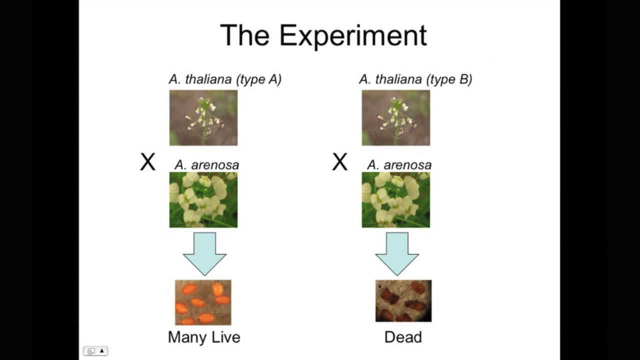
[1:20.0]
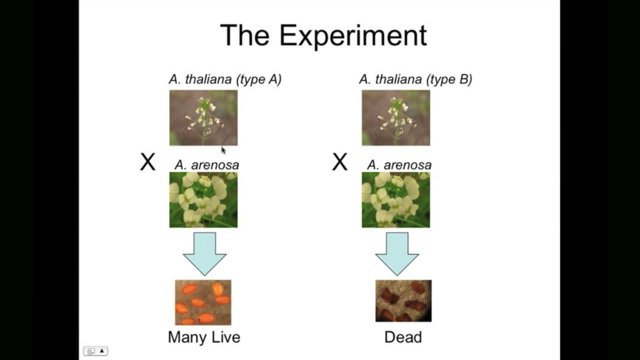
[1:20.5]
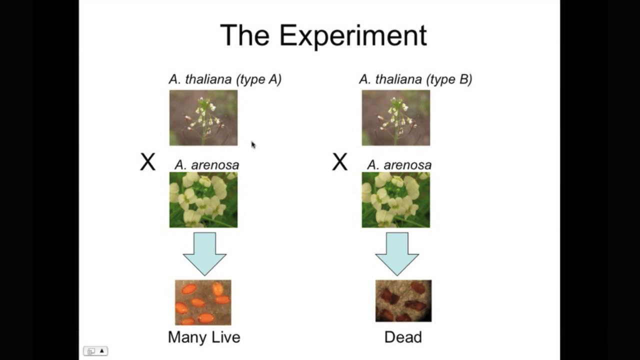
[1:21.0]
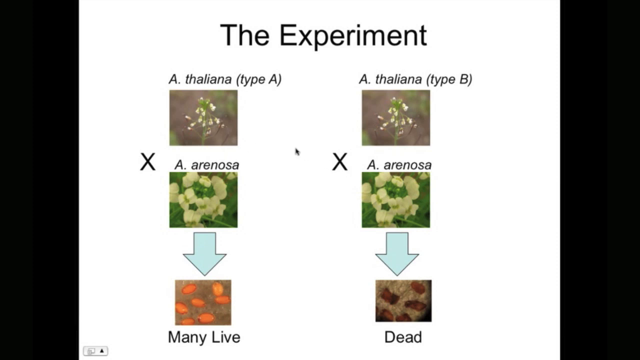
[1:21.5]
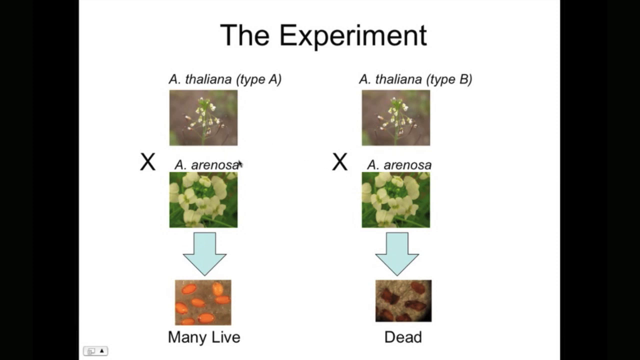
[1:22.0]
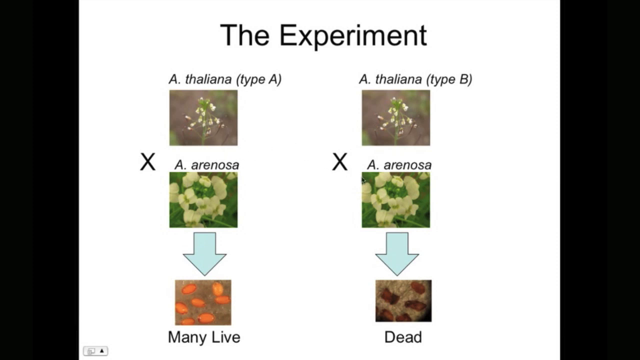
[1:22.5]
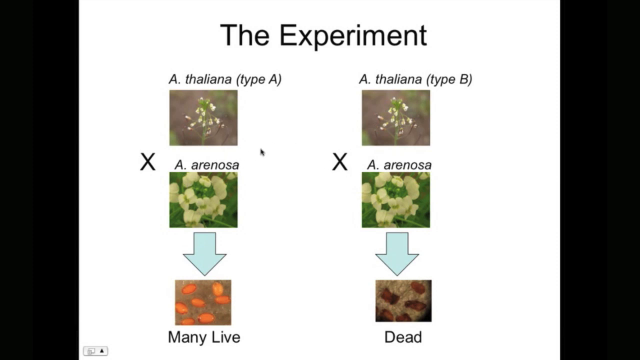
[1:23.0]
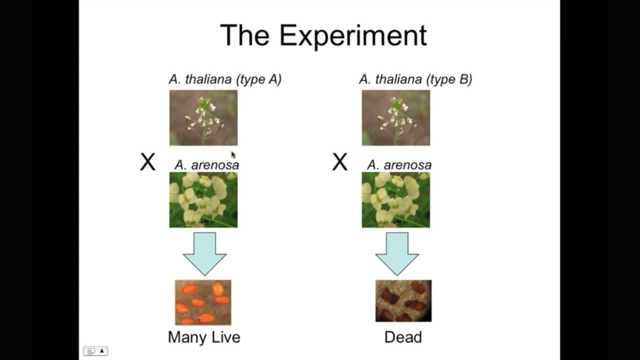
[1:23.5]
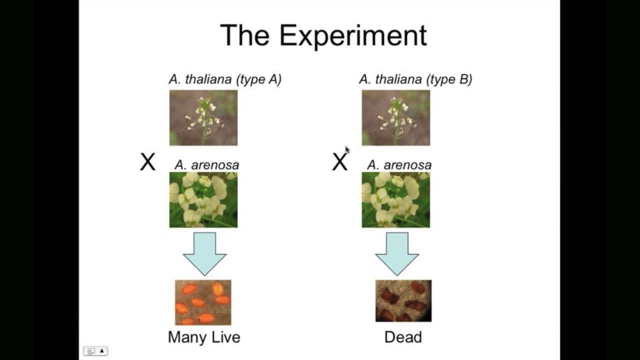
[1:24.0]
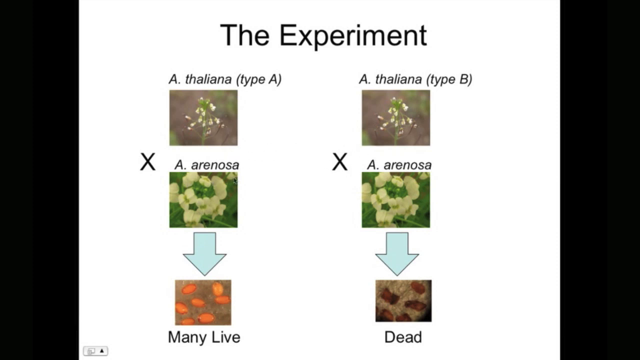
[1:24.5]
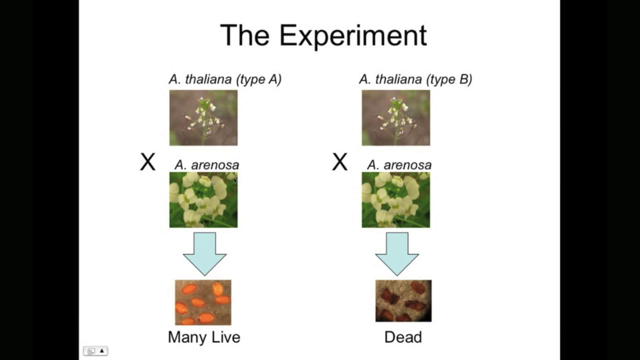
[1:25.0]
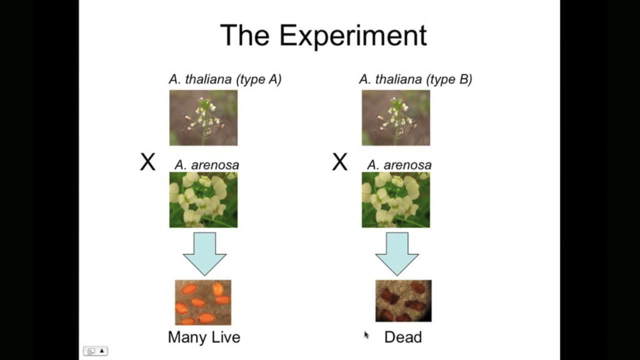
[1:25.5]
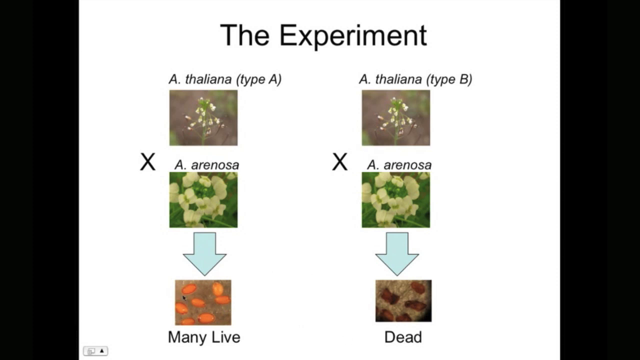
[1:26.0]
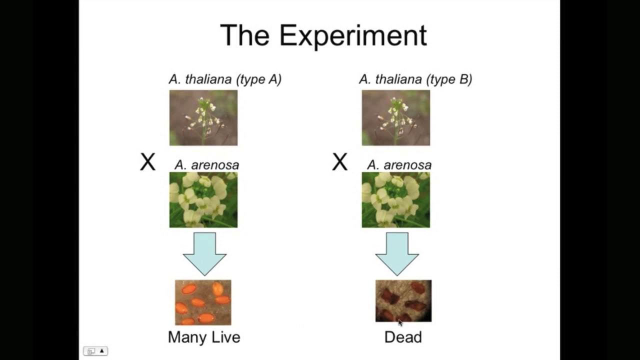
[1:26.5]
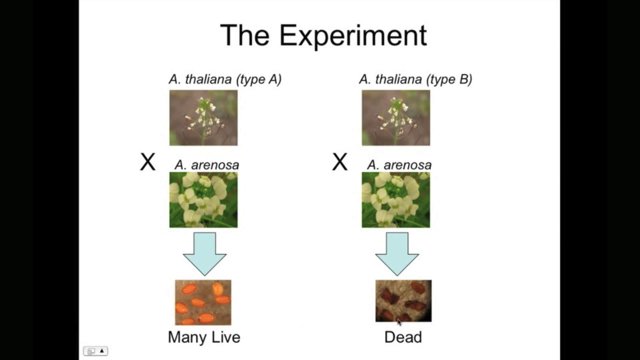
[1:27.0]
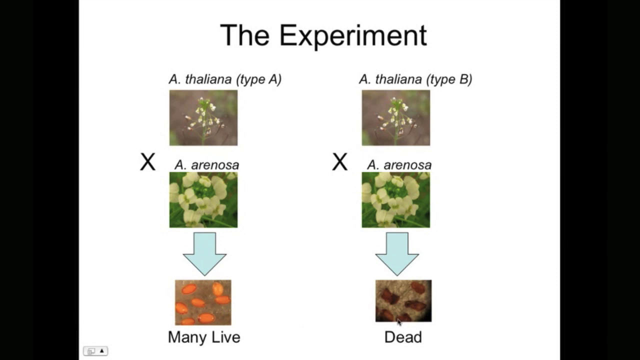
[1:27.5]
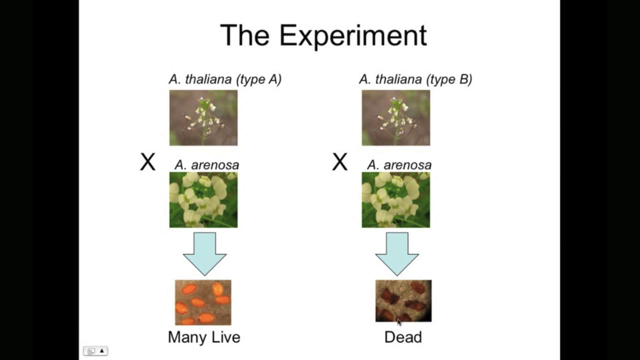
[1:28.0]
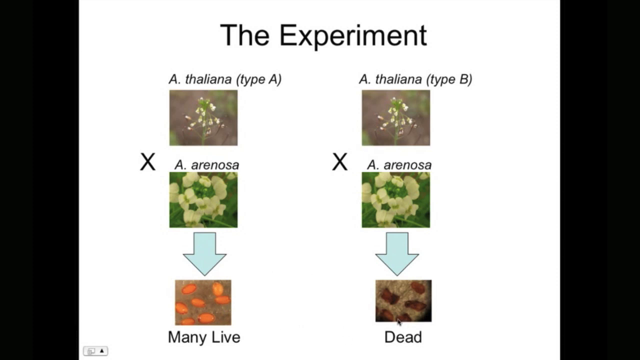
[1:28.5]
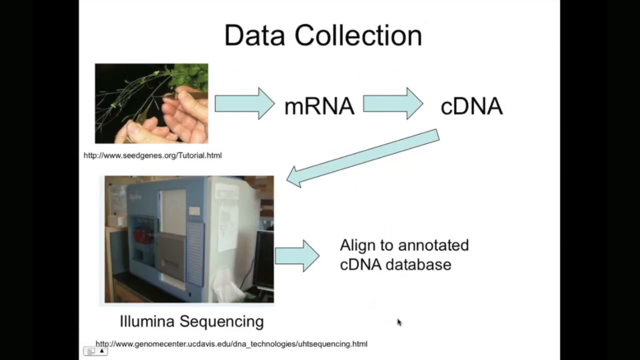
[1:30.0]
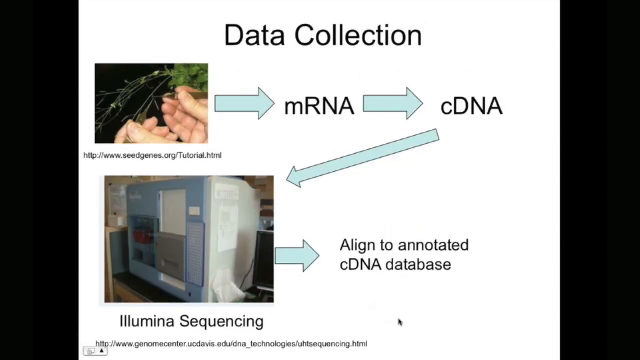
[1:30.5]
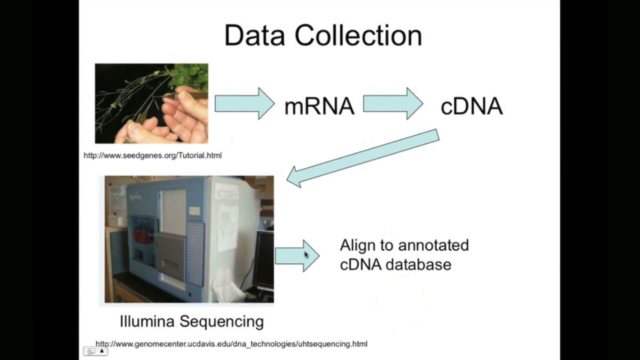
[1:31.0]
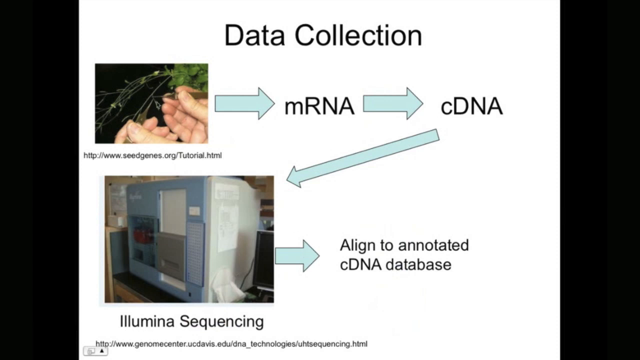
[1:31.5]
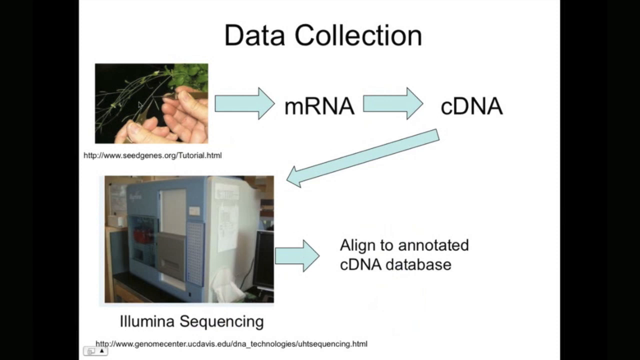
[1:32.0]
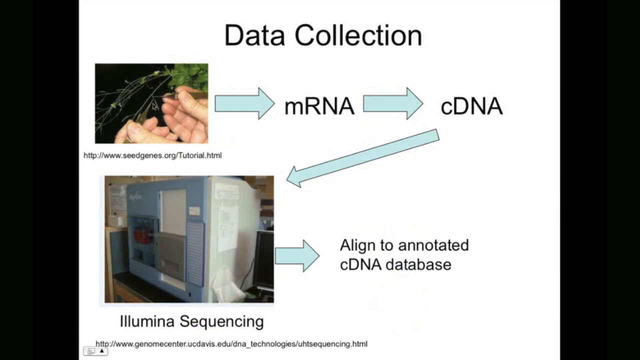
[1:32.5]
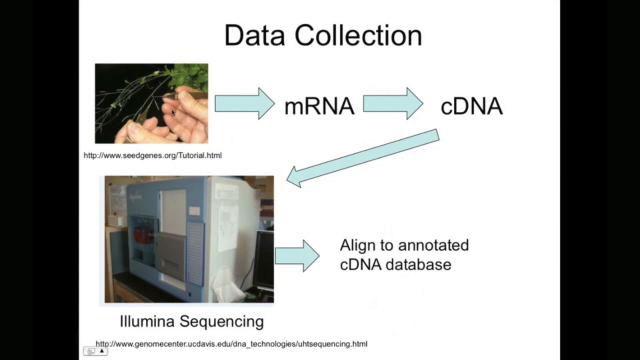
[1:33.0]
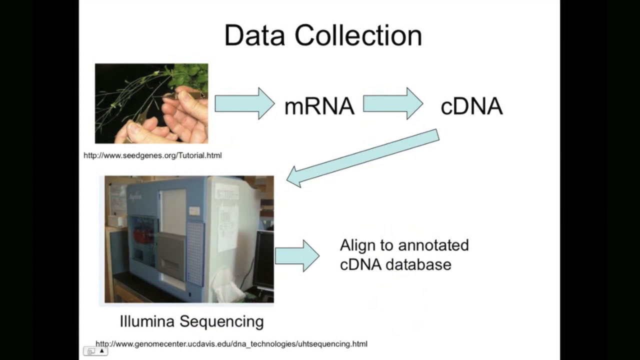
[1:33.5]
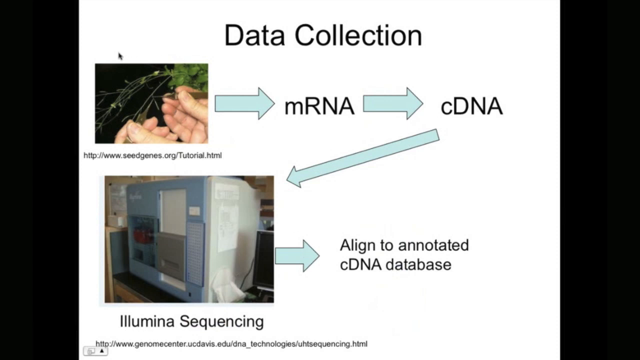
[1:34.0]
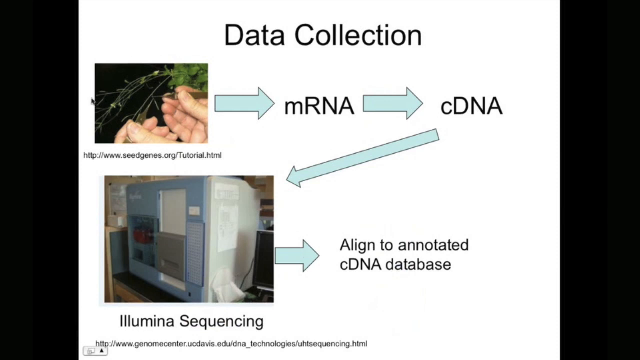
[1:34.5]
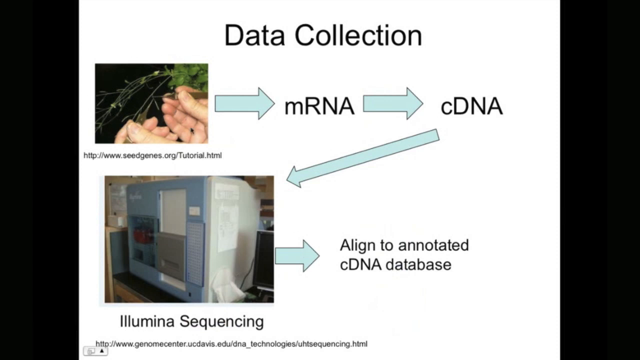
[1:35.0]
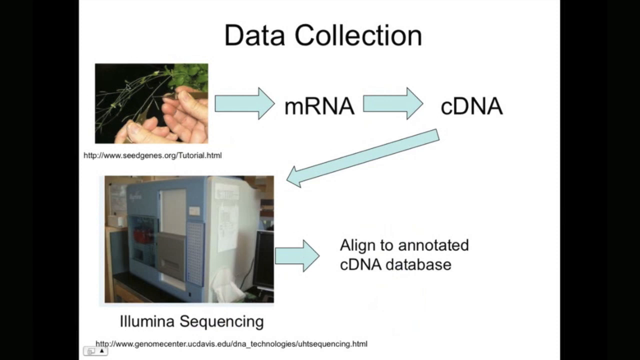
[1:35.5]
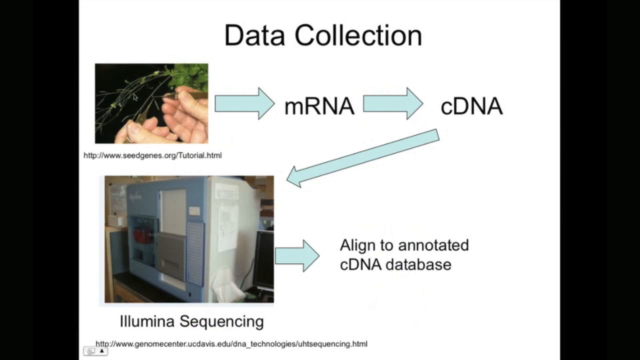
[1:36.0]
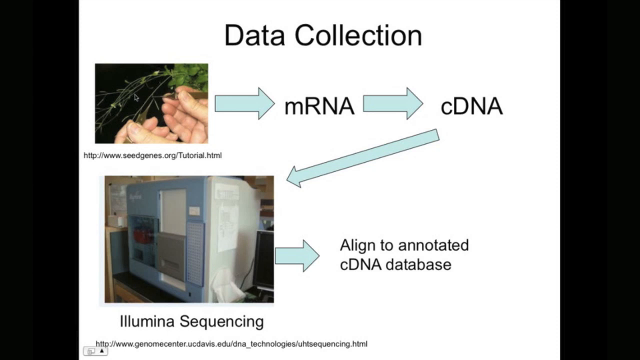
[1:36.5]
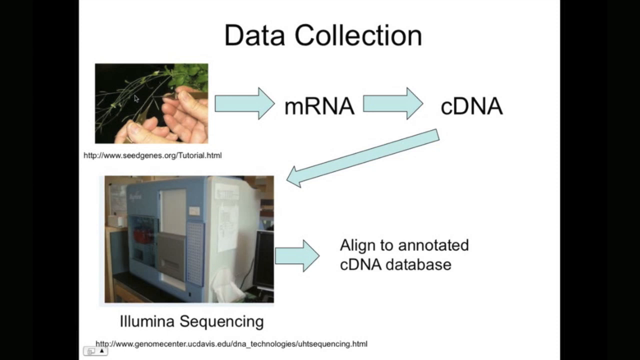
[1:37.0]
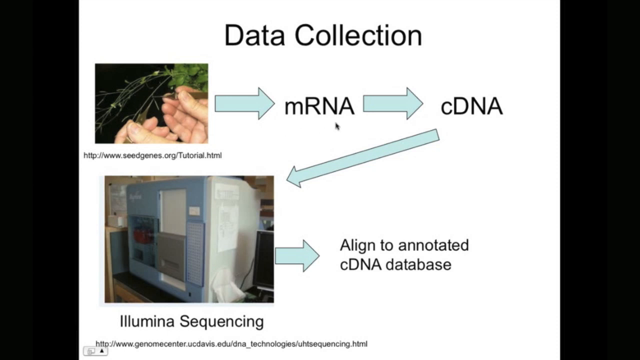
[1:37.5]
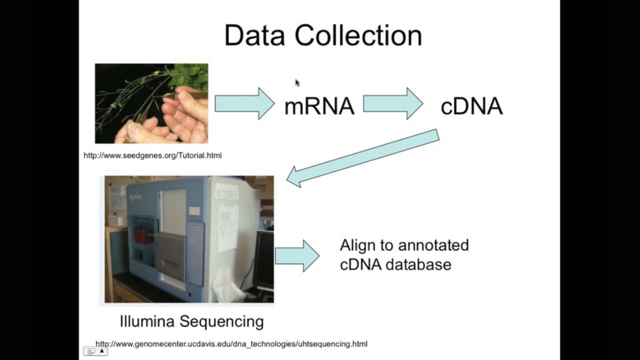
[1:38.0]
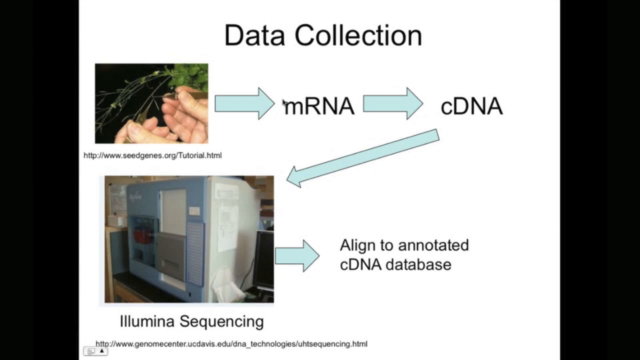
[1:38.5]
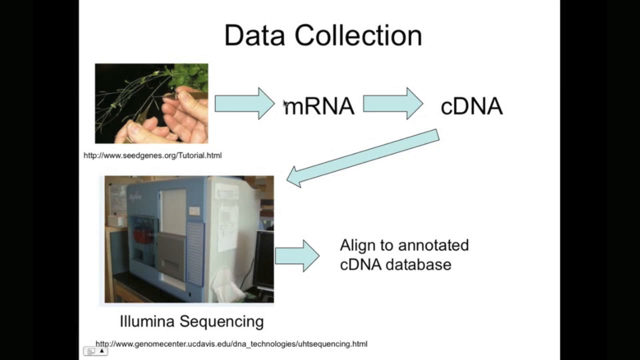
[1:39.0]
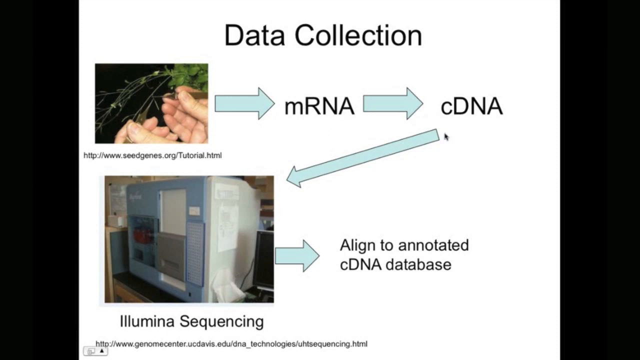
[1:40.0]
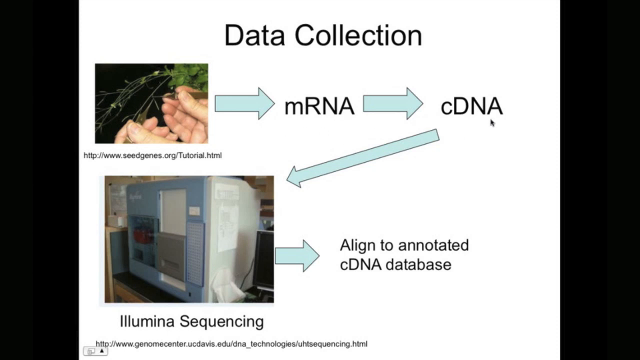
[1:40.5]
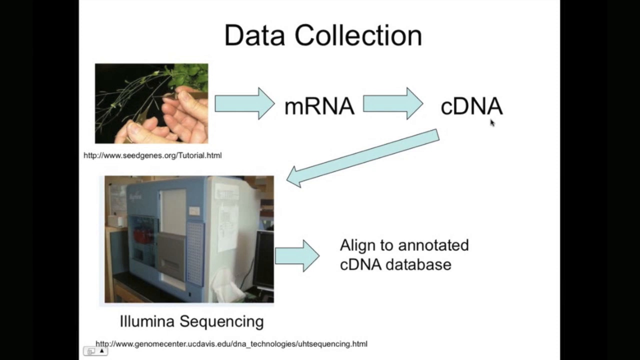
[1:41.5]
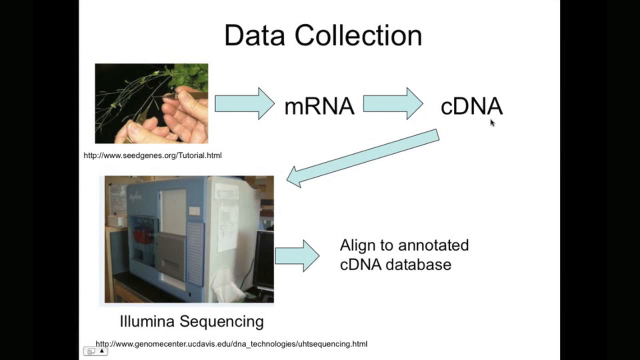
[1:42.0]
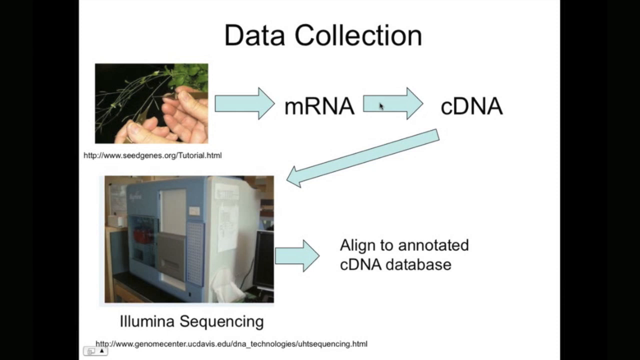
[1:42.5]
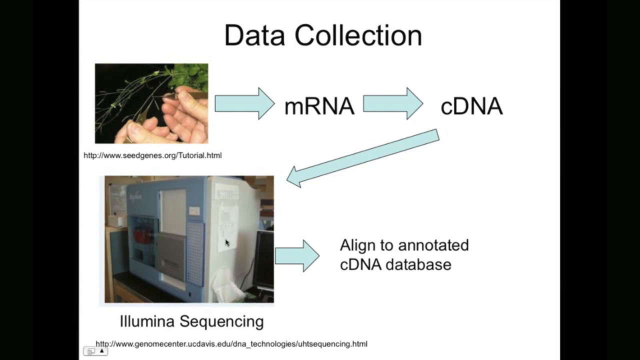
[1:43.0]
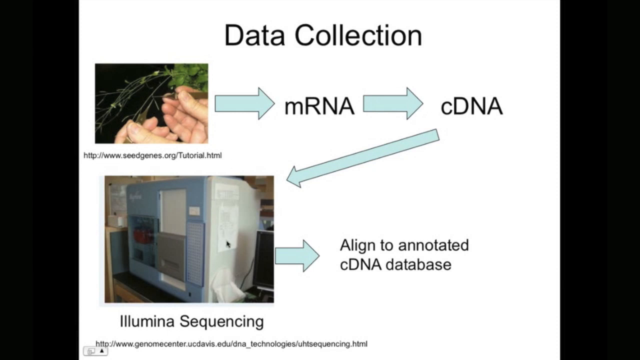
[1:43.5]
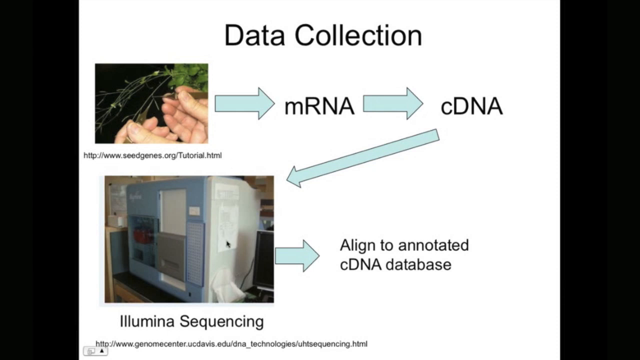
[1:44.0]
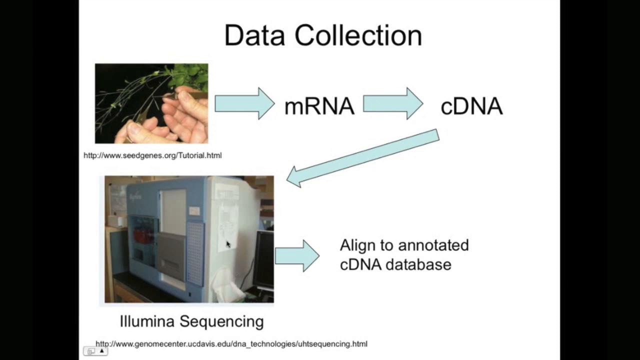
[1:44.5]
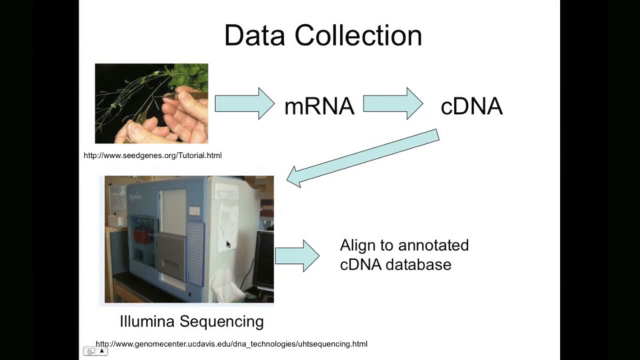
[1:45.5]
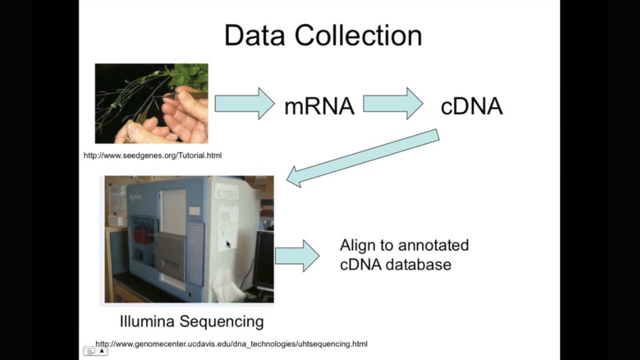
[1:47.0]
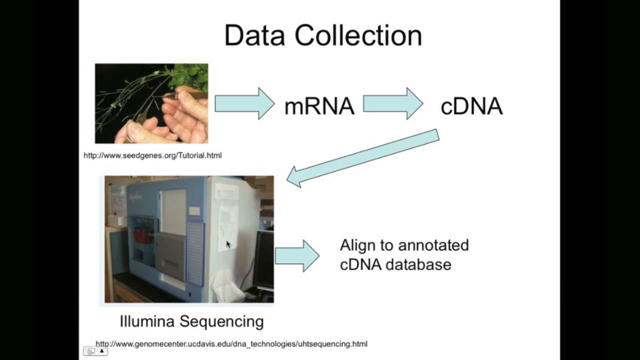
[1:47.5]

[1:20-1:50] The content continues on crosses between various species, some alive and others dead, and refers to a process called Illumina sequencing.